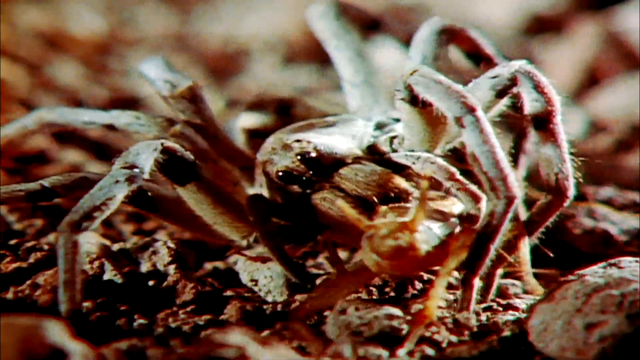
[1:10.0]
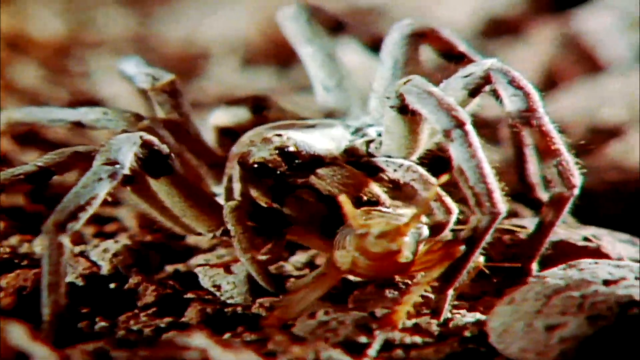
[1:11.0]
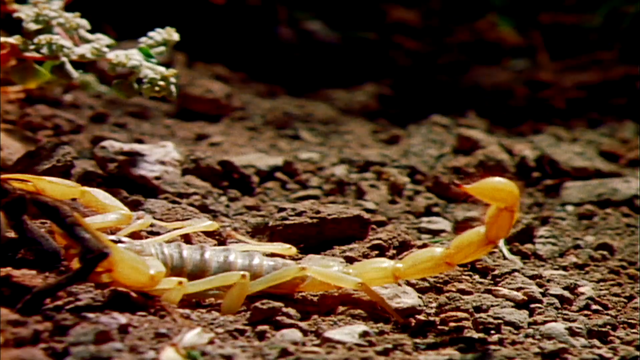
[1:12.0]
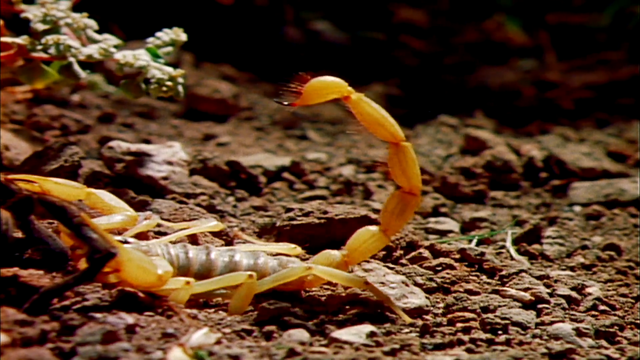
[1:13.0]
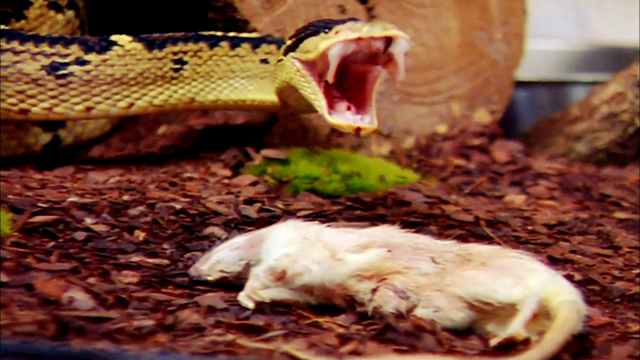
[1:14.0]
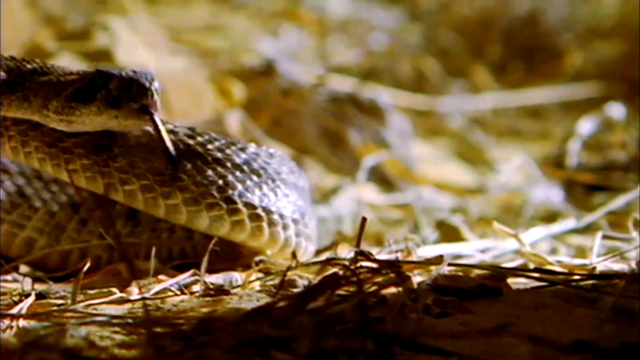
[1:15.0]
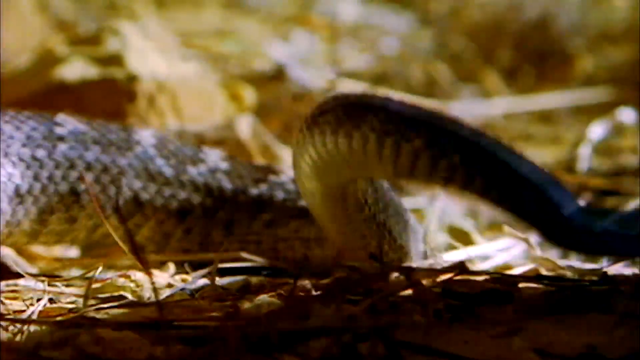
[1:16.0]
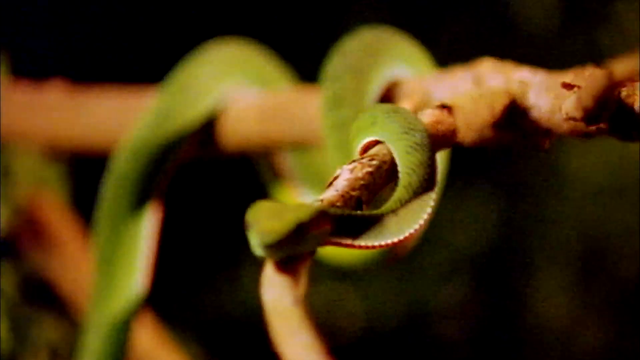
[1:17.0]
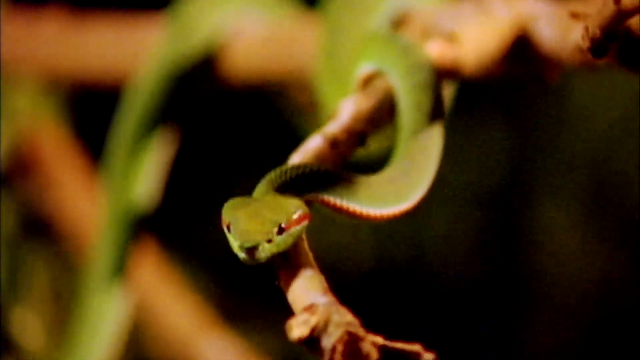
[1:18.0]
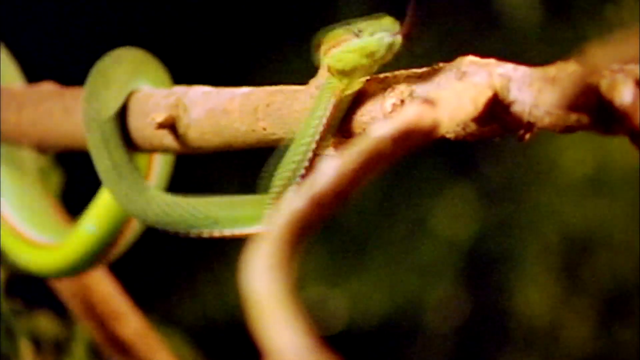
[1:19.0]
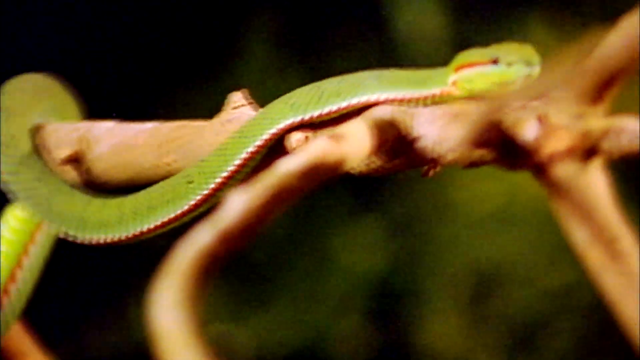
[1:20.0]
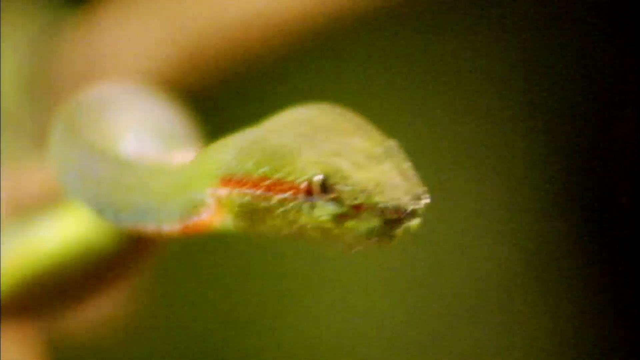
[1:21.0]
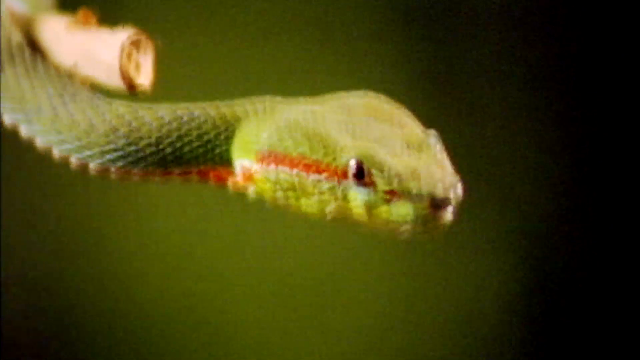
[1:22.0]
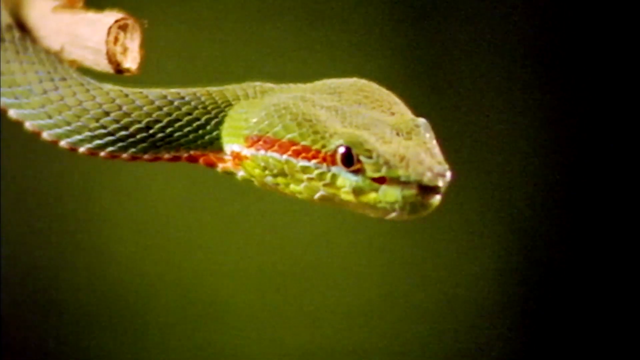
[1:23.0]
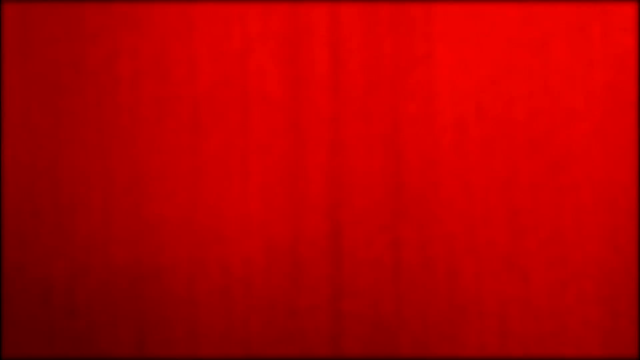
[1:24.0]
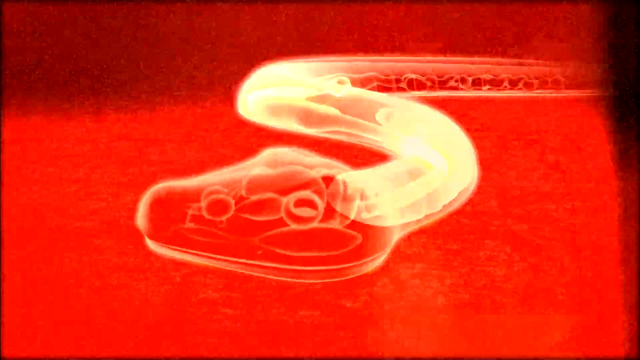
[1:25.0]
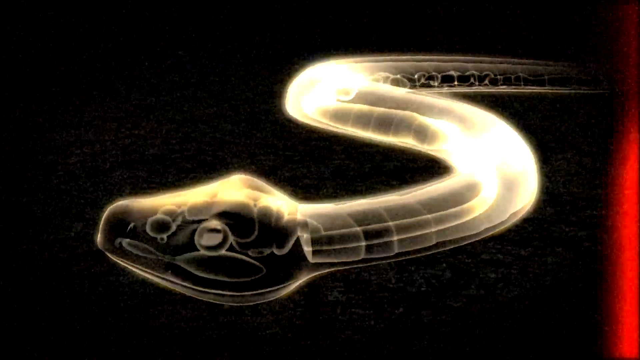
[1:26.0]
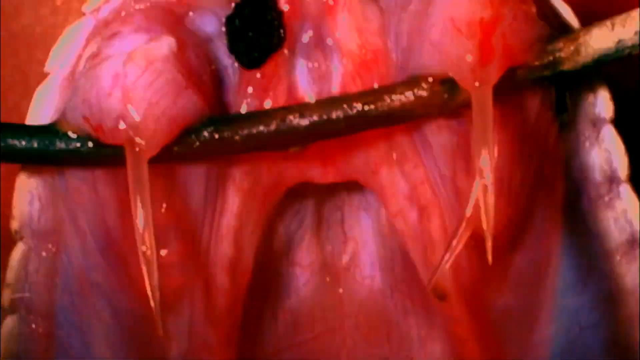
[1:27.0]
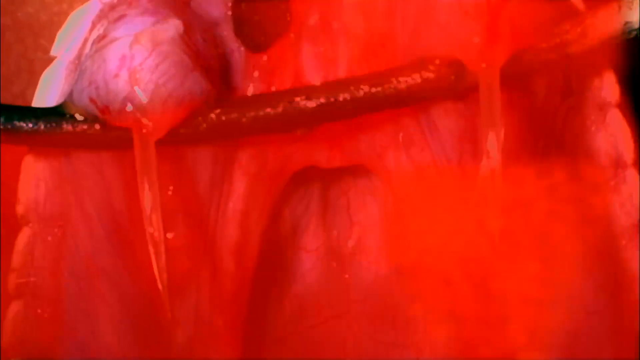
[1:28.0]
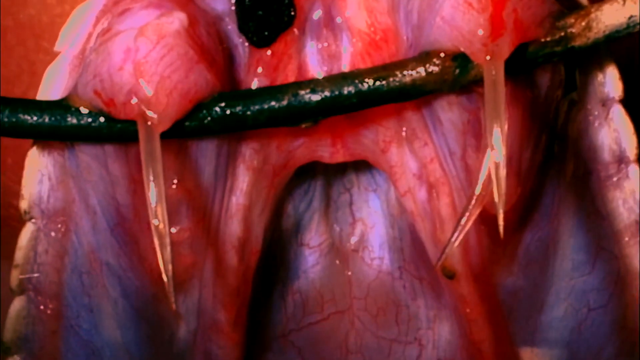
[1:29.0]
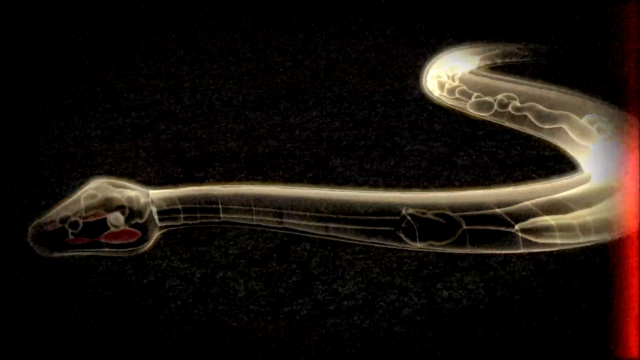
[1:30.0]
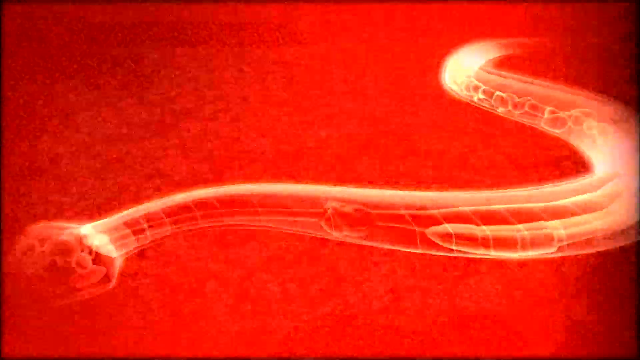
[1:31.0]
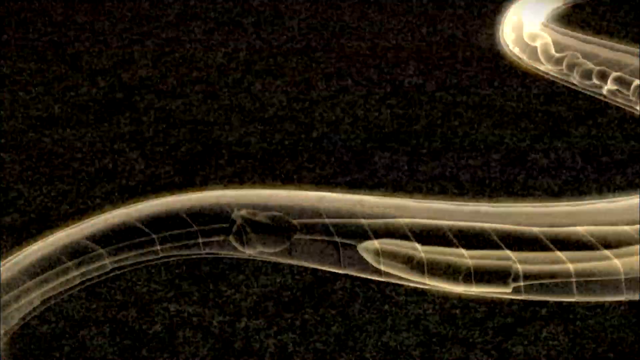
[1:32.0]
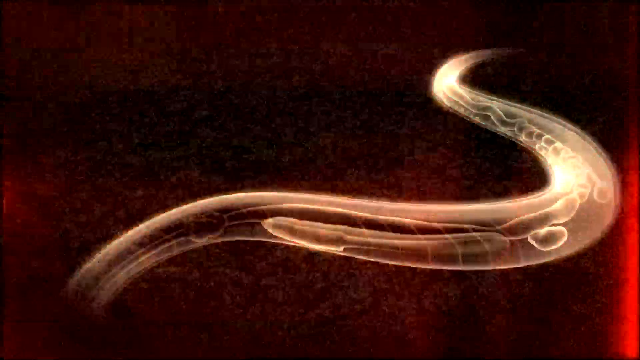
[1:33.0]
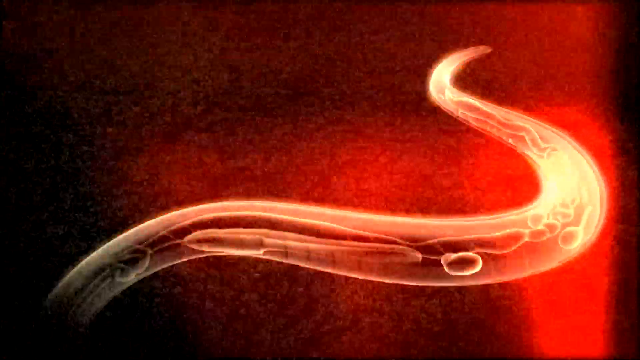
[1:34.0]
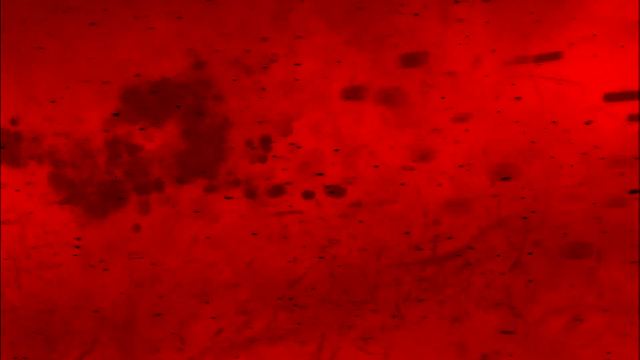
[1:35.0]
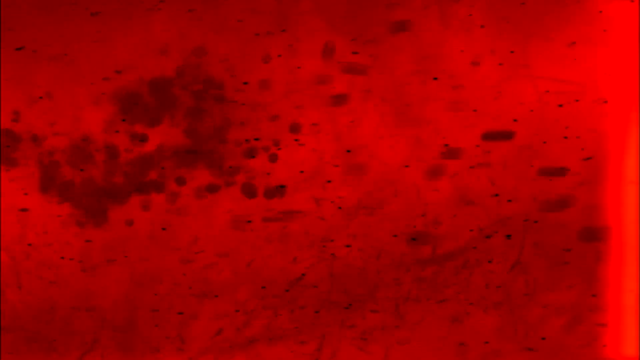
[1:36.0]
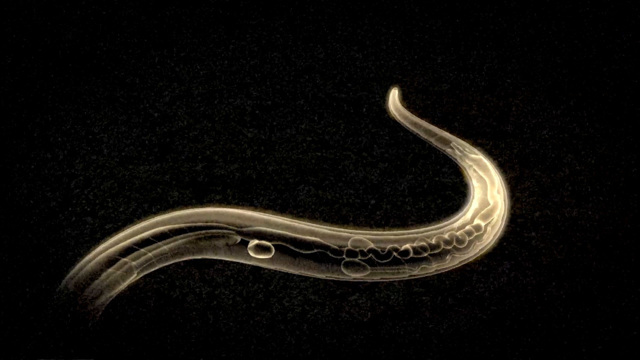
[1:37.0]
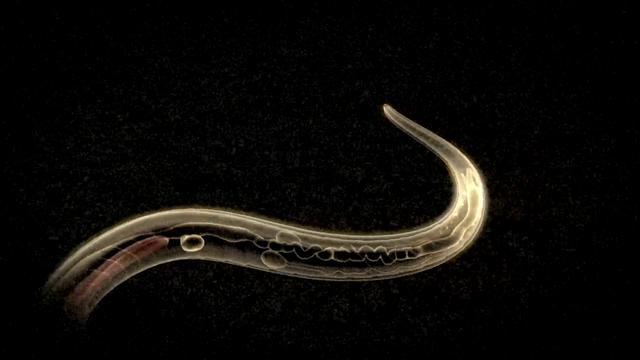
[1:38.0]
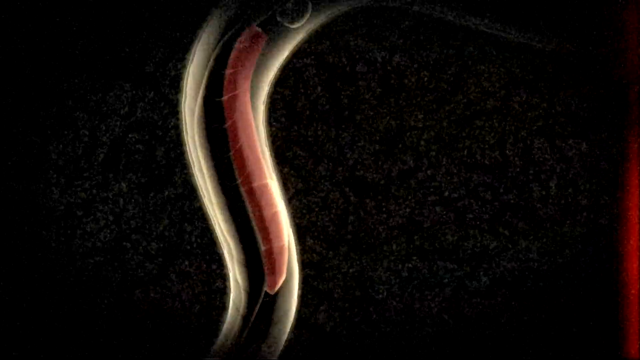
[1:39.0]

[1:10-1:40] The tarantula is eating some kind of creature. The video cuts to what looks like a yellow scorpion and zooms in on its tail and stinger. Next, what looks like a yellow snake opens its mouth right behind some kind of dead rodent; the rodent appears to be on the floor with the snake hovering over it. A snake curled up on the ground then quickly moves up as if attacking something. A different snake, a green one, is wrapped around what looks like a tree branch and moves toward the center of the screen, facing the camera. Another shot shows the same green snake crawling on a branch, followed by more close-up footage of it. The video cuts to a red screen, then to what looks like an animated version of a snake showing its inside, and then to what looks like a close-up of a snake's teeth and throat area, which looks red, with teeth on the left and right sides.